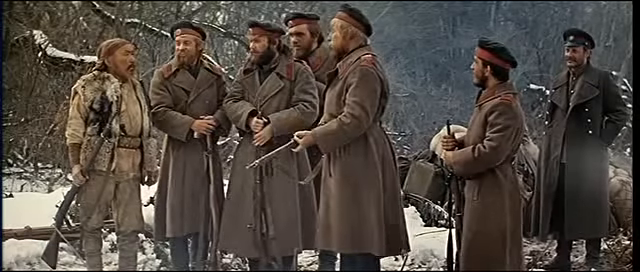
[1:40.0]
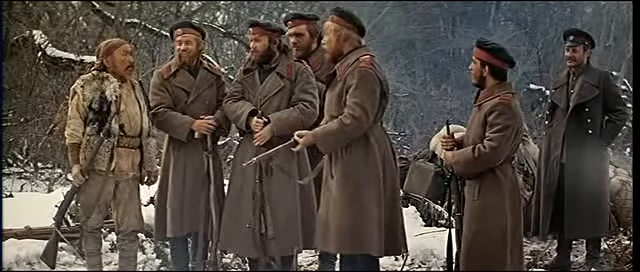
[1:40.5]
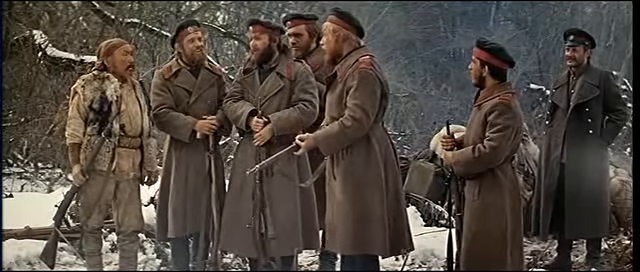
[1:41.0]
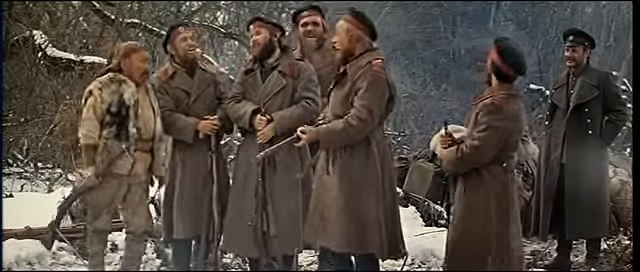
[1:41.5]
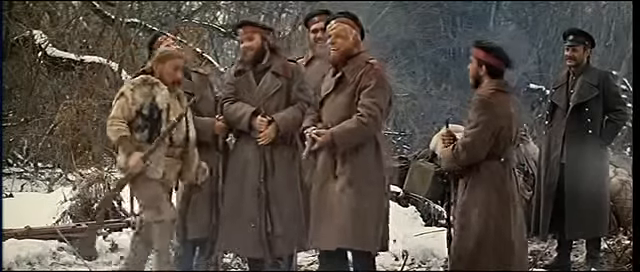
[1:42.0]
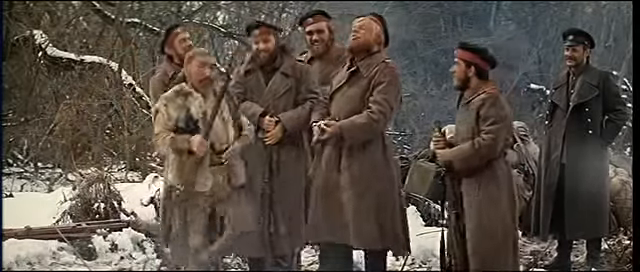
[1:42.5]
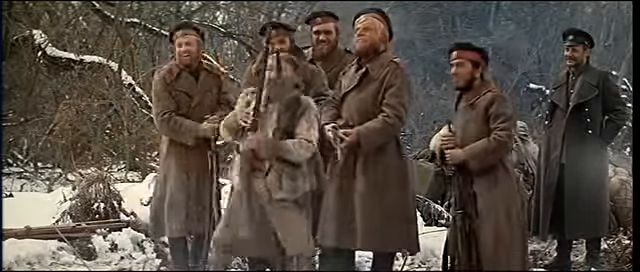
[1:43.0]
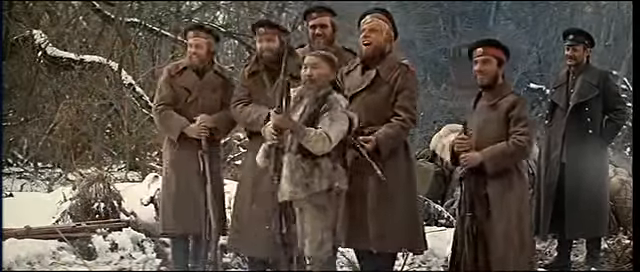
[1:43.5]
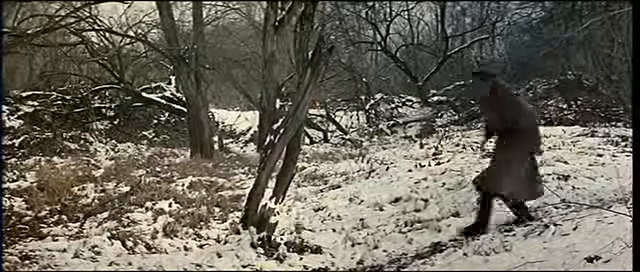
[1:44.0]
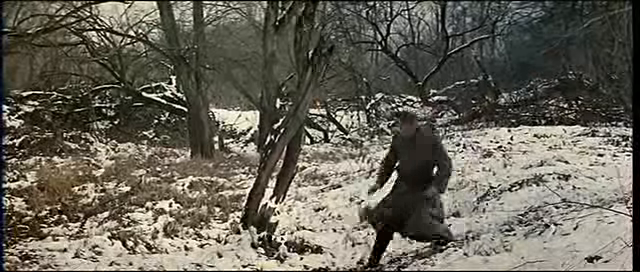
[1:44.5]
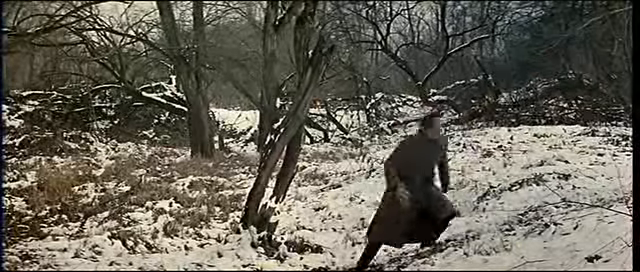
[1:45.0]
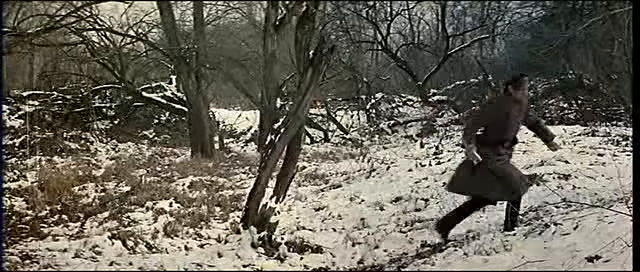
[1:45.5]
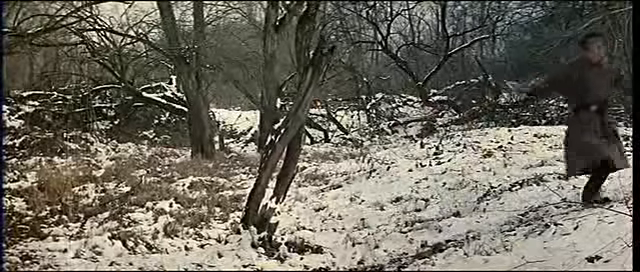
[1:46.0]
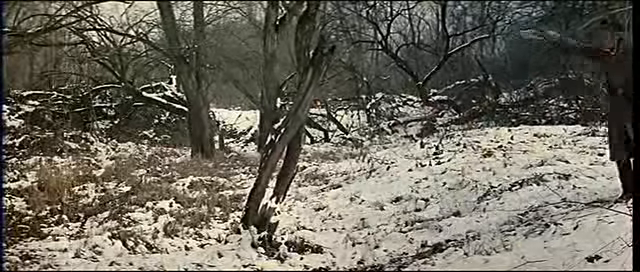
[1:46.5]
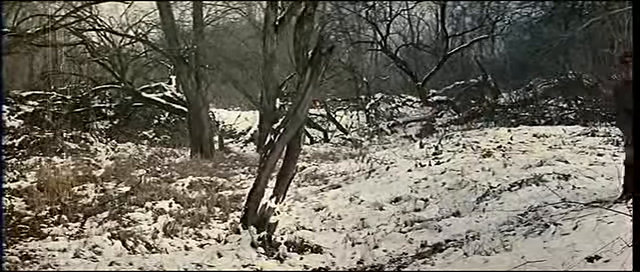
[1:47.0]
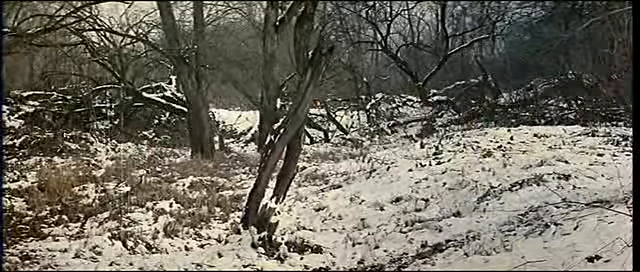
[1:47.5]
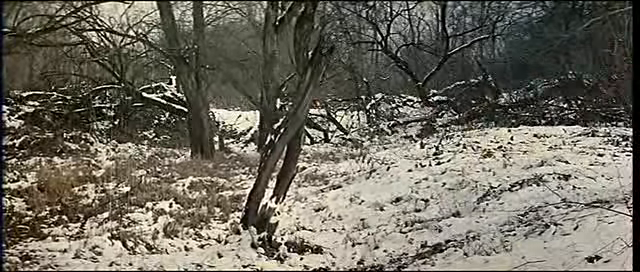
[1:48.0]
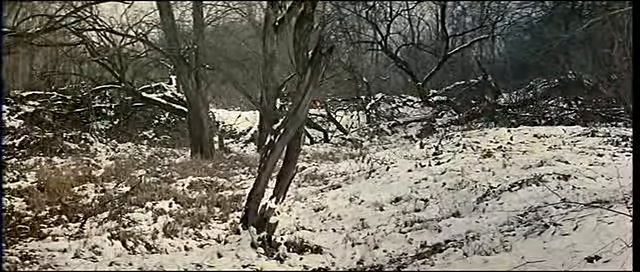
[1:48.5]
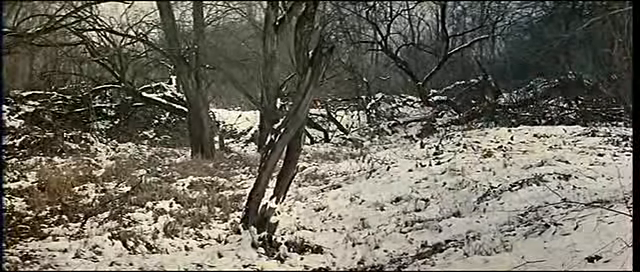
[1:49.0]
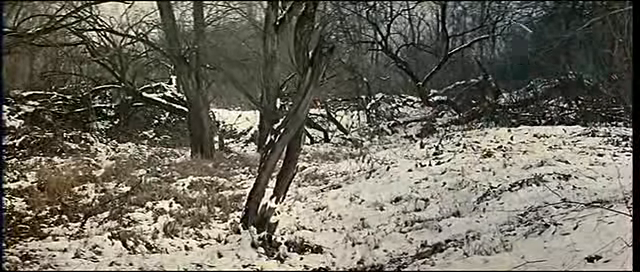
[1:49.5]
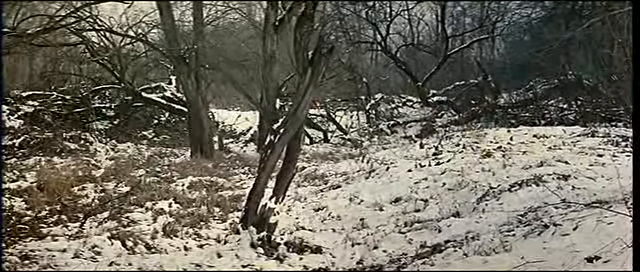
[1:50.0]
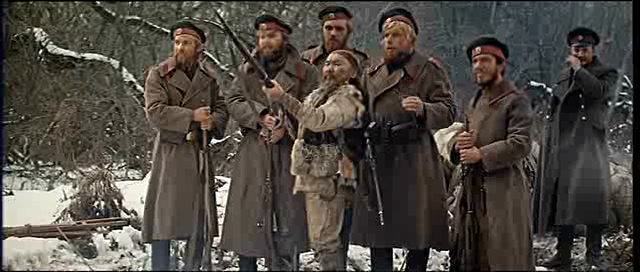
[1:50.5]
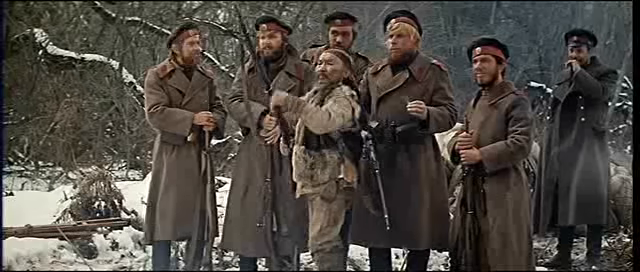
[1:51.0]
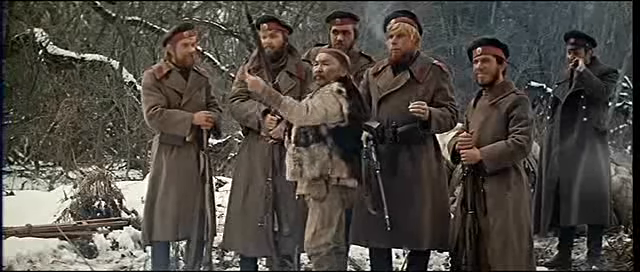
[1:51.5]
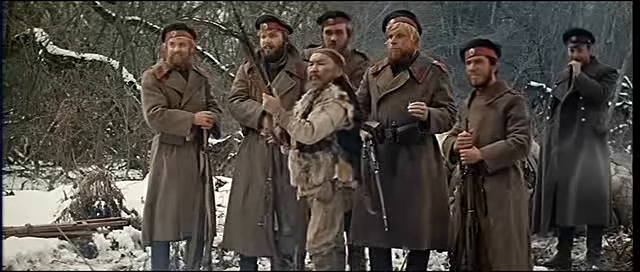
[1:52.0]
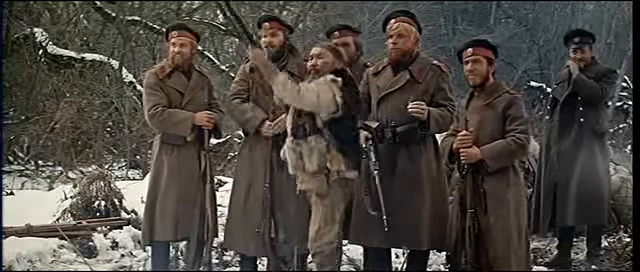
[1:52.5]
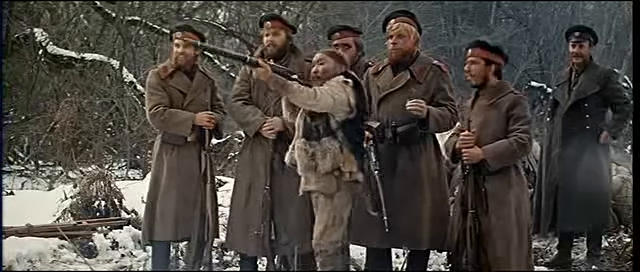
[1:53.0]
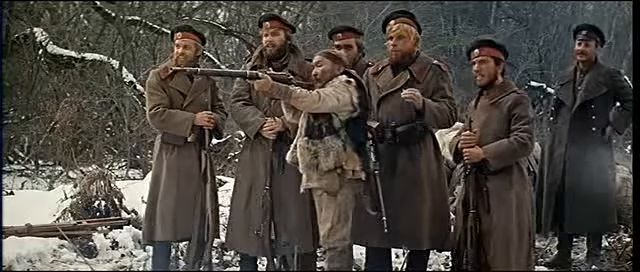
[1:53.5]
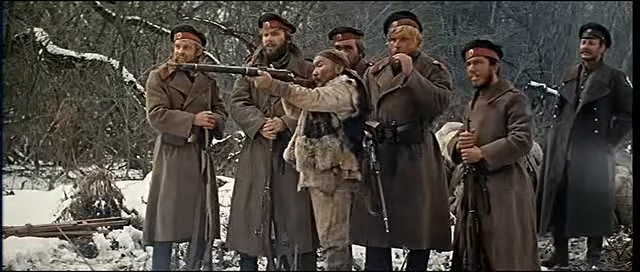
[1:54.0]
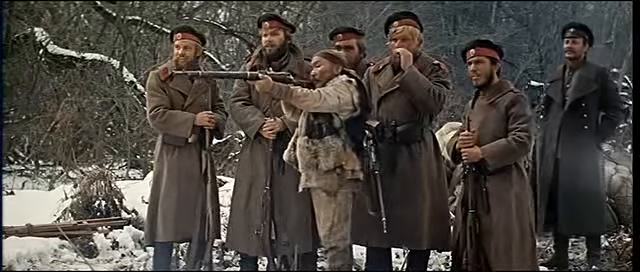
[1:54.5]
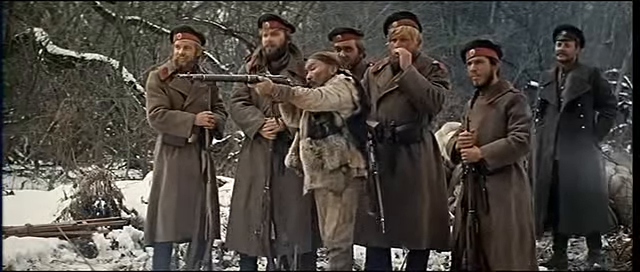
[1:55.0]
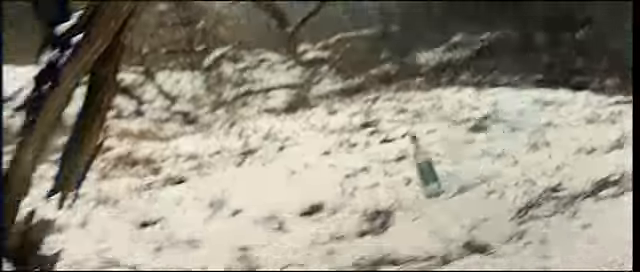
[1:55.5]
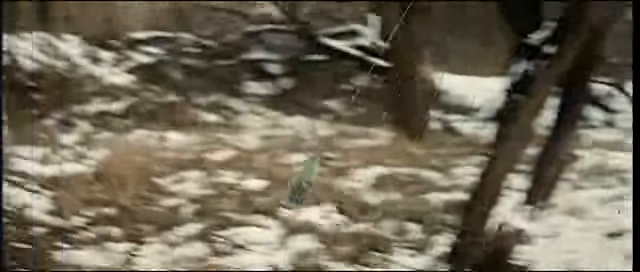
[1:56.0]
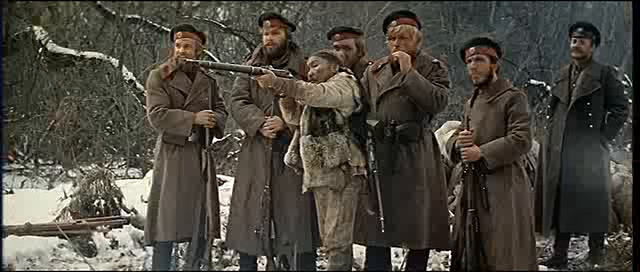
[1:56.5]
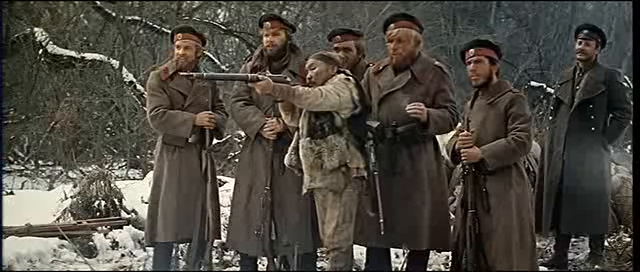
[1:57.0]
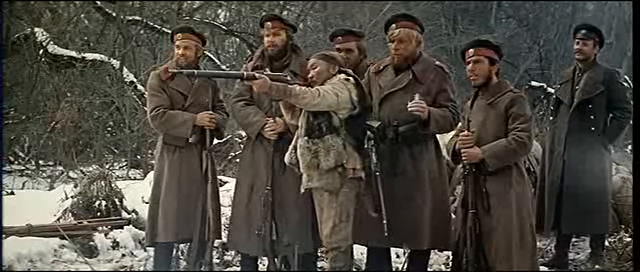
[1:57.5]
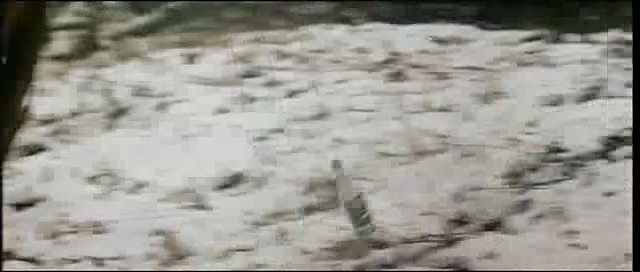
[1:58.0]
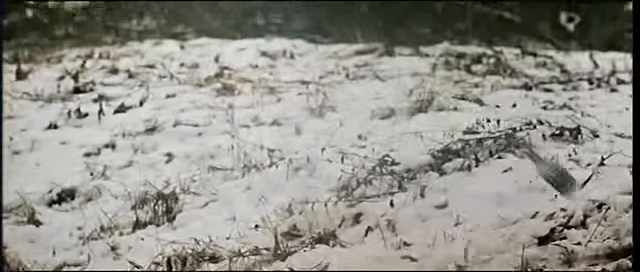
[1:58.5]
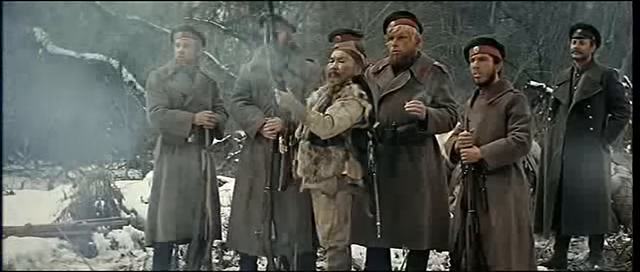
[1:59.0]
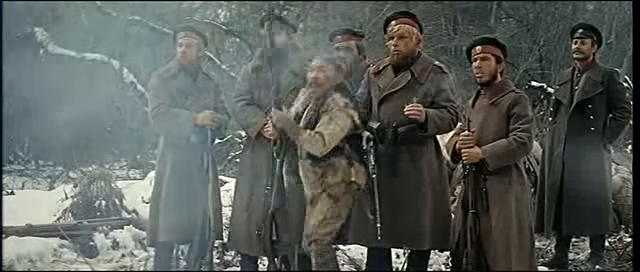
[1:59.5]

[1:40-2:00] On the snowy mountain, the Asian man is on the left and a group of five uniformed men is in the middle and to the right. Further in the back is the uniformed man who came in with the Asian man. His uniform looks slightly different: the group's hats have a red stripe and look more cloth-like, without shape, while his looks more like a pilot hat with a kind of hard leather part and is all black. His coat looks darker, with kind of red parts, while the group appears to have red shoulder parts. A uniformed man gets the bottle hanging from the string, goes to the middle where the bottle is, walks off to the right and swings the bottle hard to the left so it gains momentum and swings right and left. The Asian man is now in front of all the uniformed men with his rifle and takes a shot at the bottle. The video cuts to a close-up of the bottle swinging, cuts to the Asian man, and cuts to the bottle as it appears to have fallen off the string.